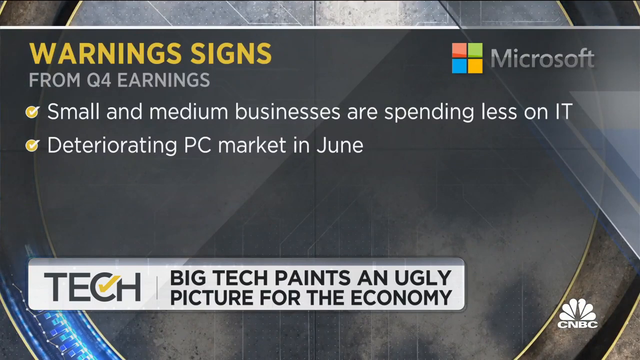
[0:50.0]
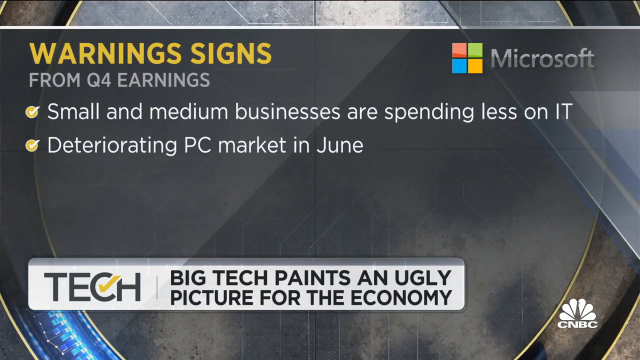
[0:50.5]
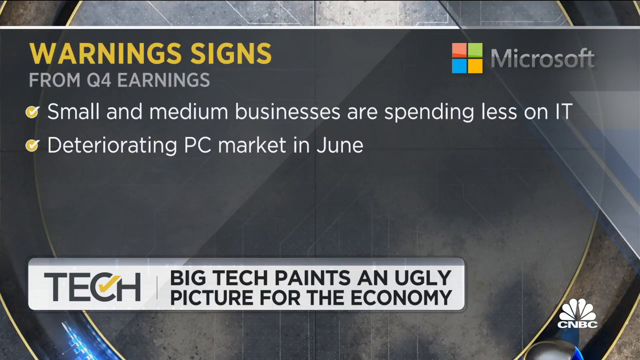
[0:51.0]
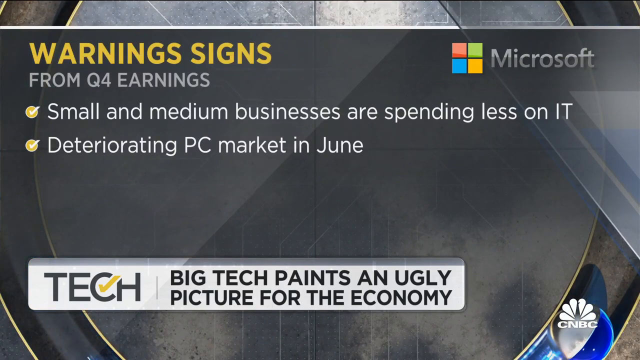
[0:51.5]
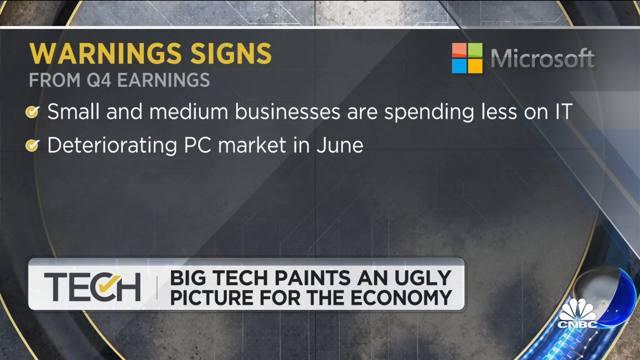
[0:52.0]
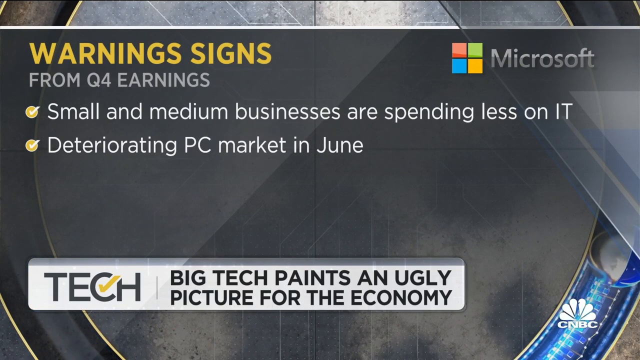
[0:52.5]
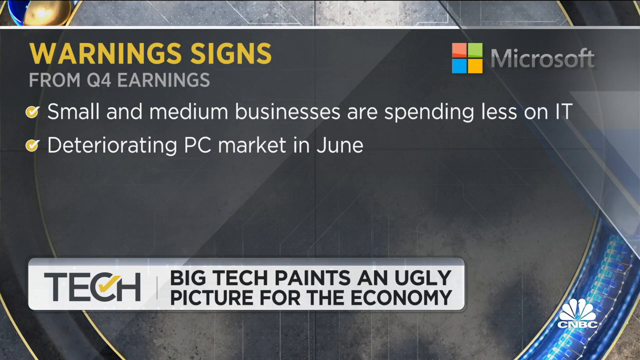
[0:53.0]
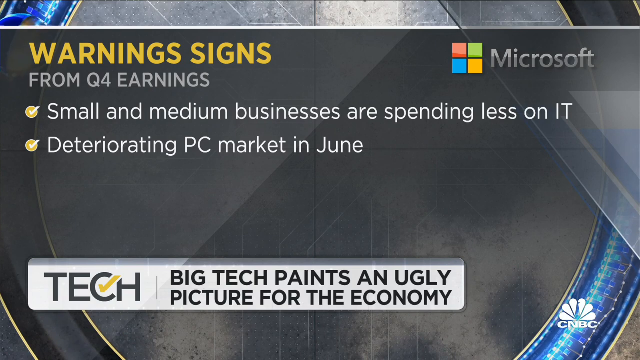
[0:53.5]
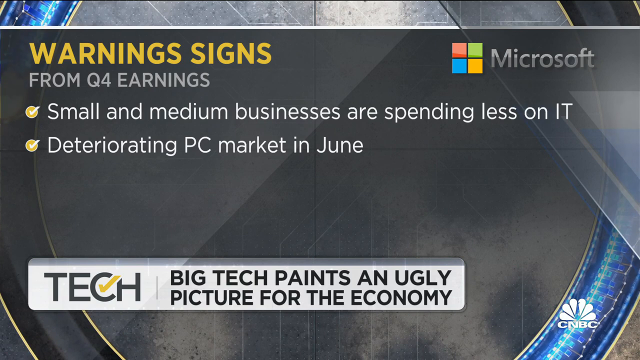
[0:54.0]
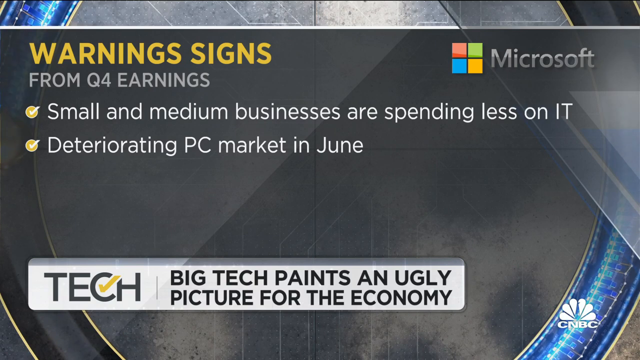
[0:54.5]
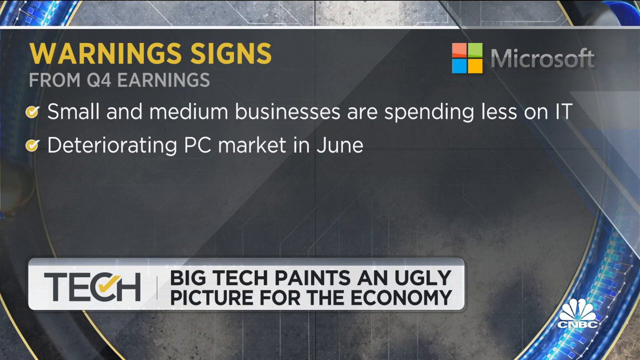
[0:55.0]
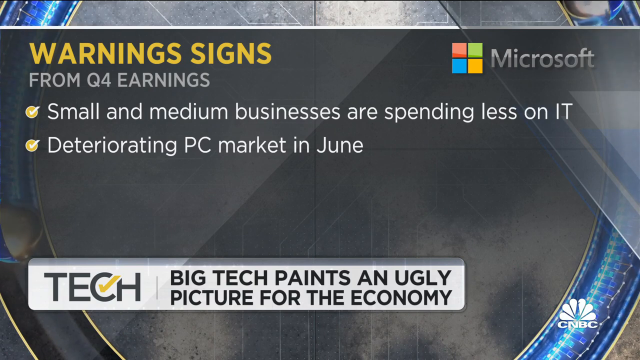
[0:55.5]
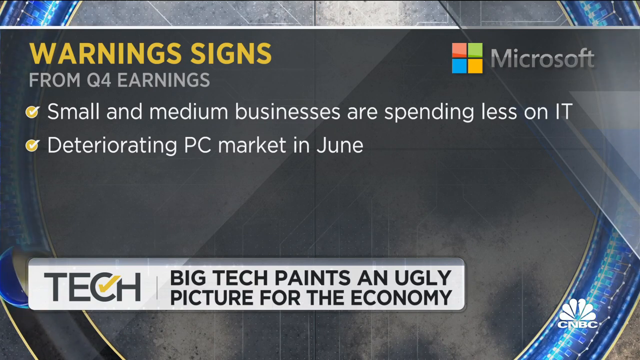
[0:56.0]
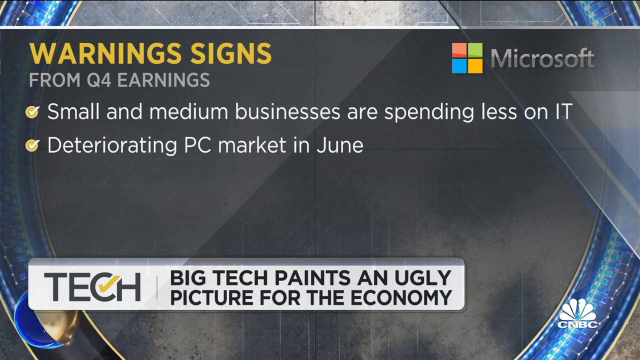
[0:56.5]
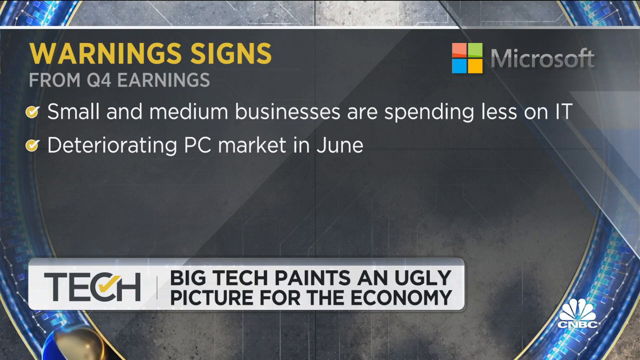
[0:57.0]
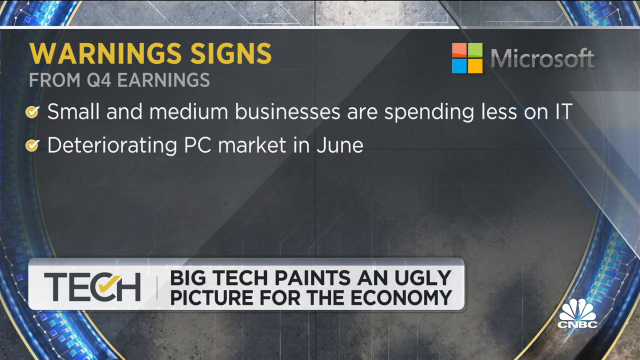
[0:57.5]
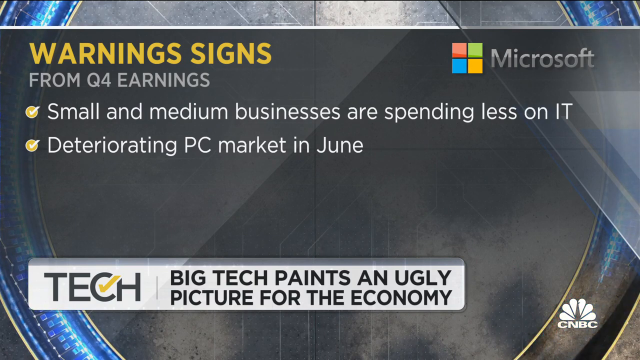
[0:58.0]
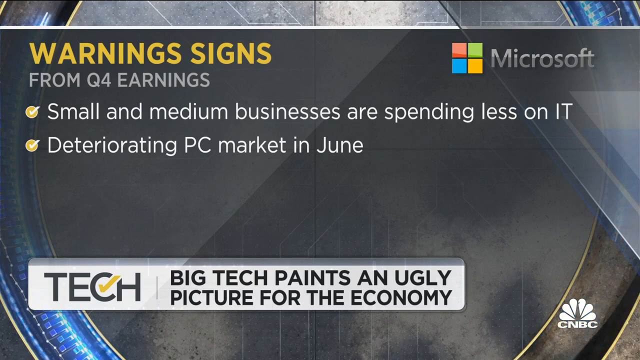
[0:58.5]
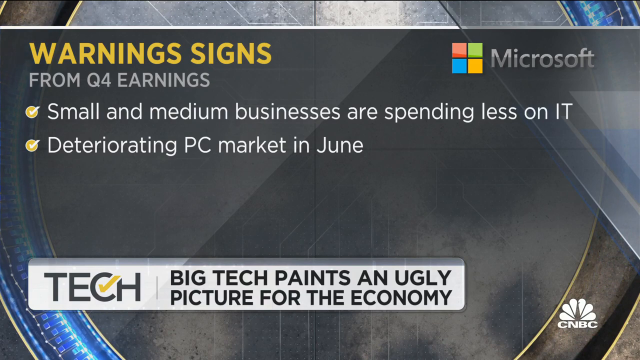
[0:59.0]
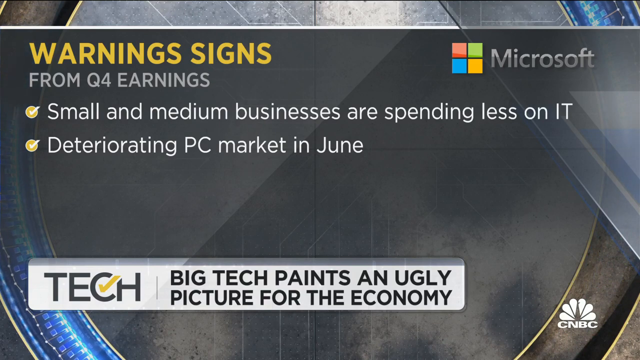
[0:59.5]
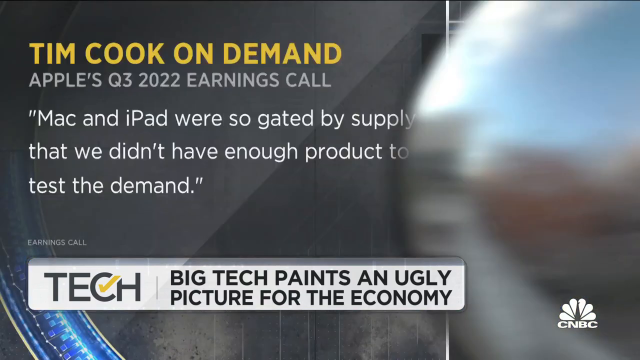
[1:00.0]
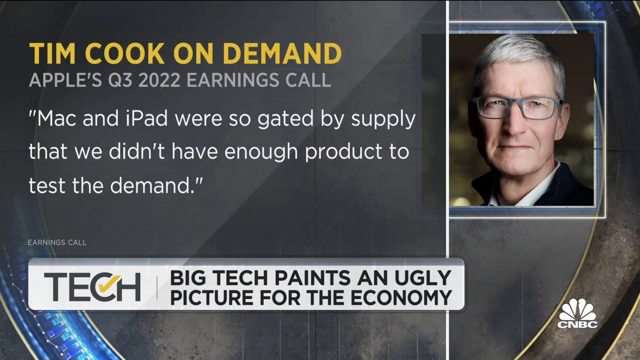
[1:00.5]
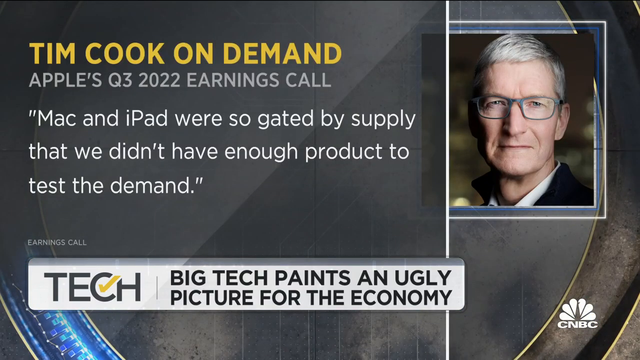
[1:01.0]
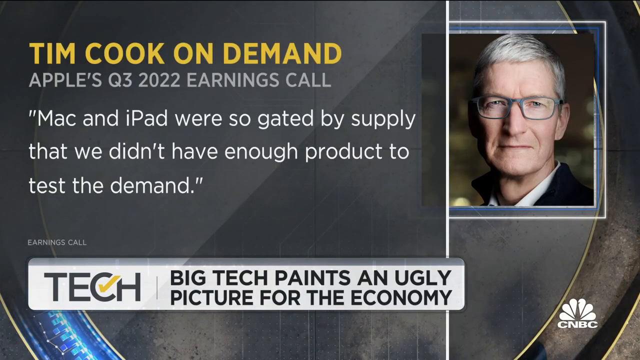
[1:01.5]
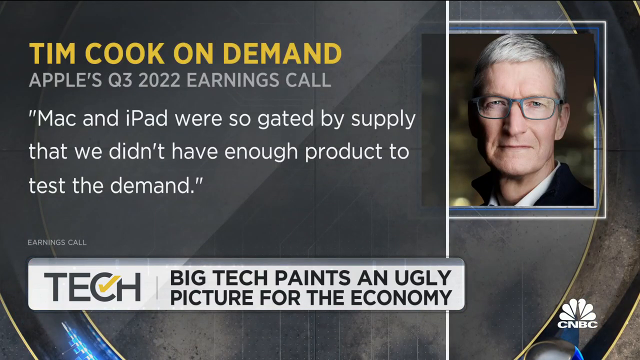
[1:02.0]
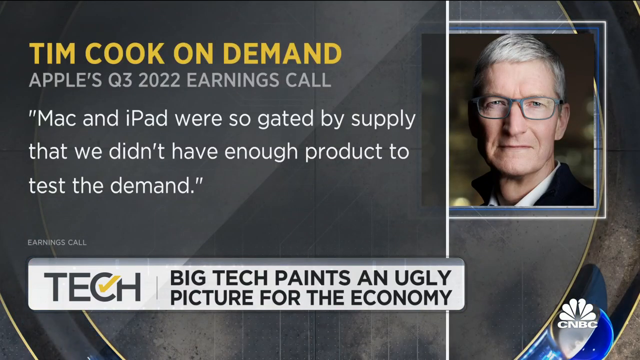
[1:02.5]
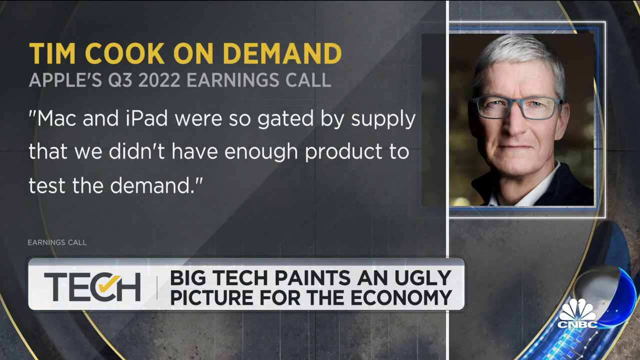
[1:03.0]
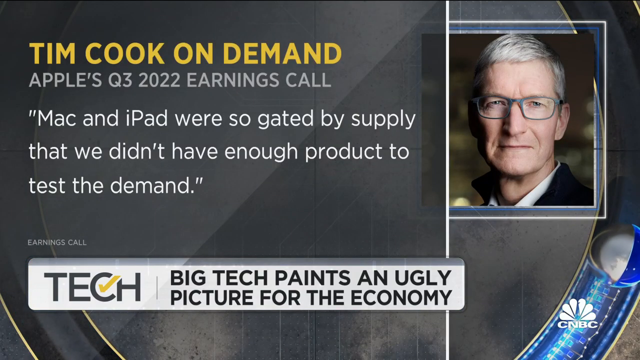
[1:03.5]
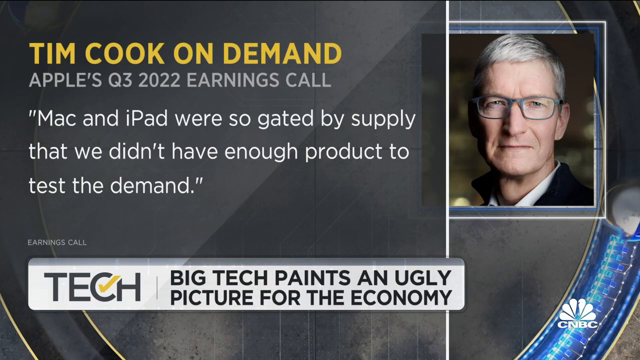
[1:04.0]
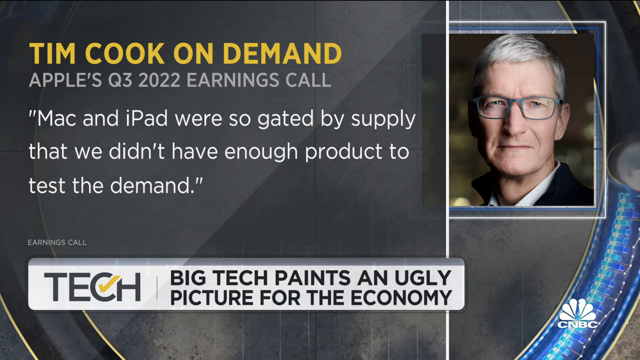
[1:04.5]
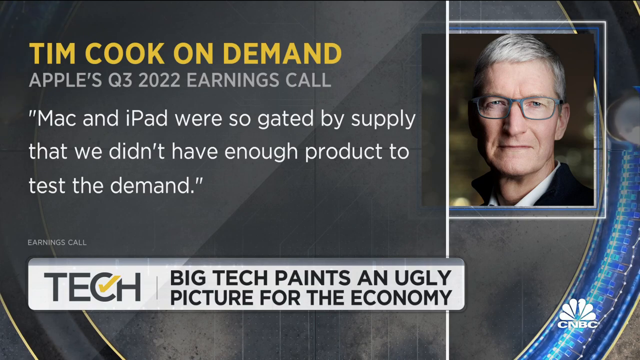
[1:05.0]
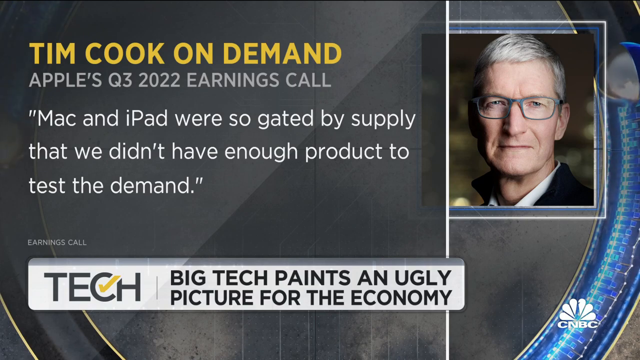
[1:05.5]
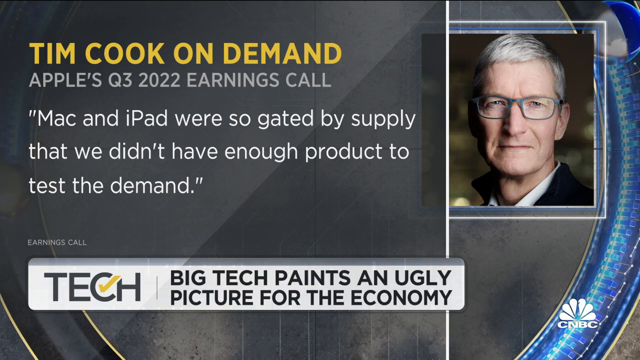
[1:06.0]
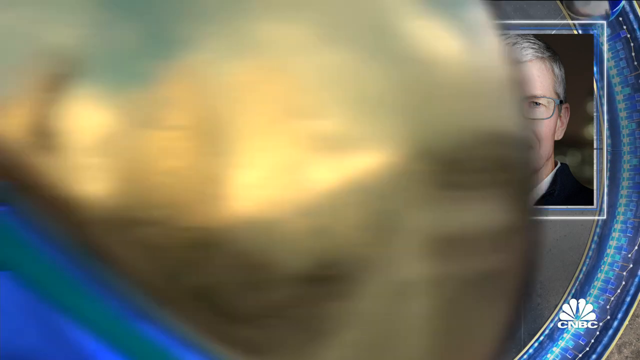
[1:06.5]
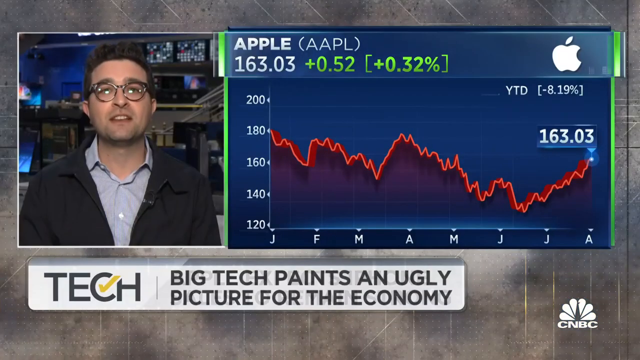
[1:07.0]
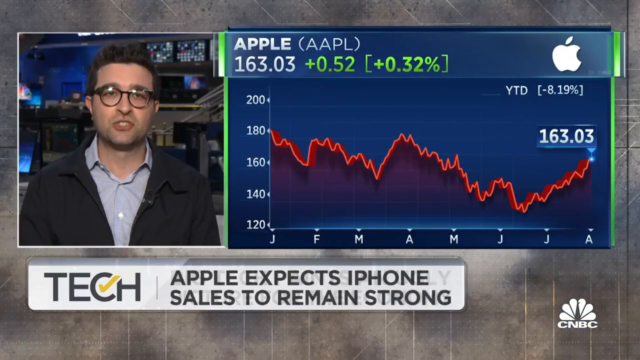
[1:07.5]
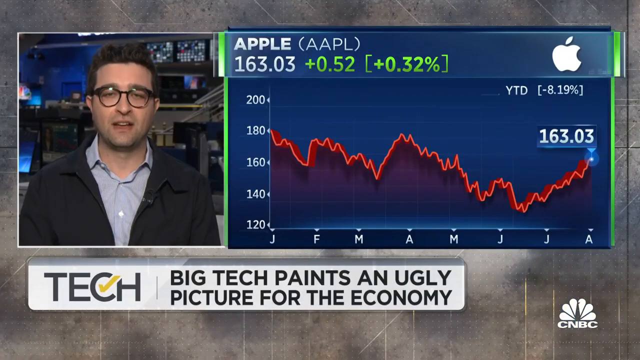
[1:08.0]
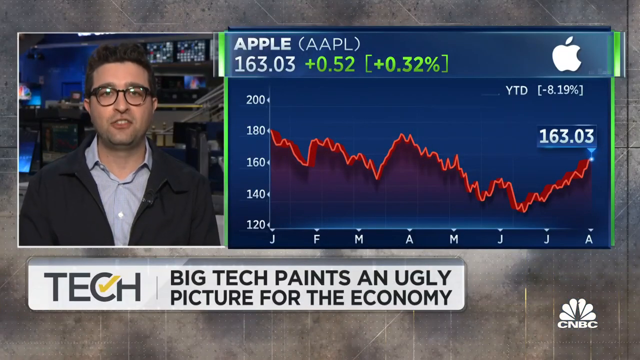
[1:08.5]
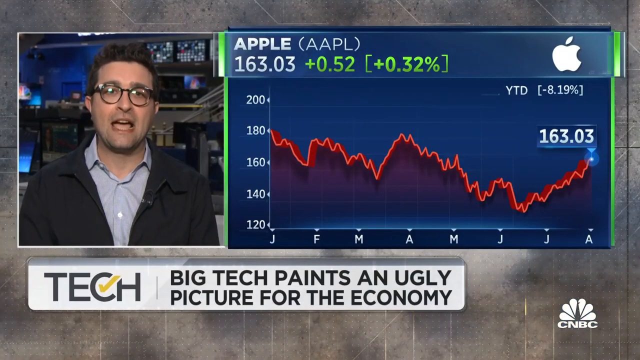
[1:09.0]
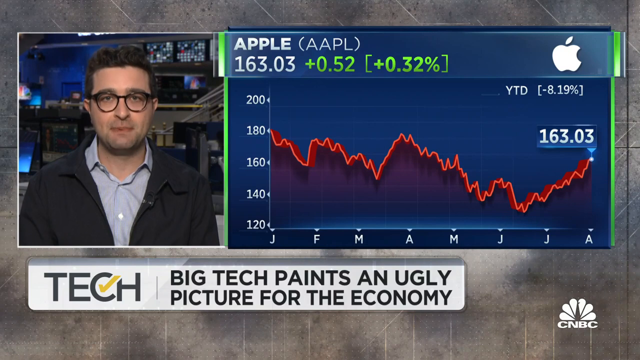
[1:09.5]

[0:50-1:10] The CNBC news story about big tech painting an ugly picture for the economy continues with the warning signs from quarter 4 earnings. A Microsoft logo is in the upper right-hand corner during this part of the segment. The first warning sign is that small and medium businesses are spending less on IT, and the second is a deteriorating PC market in June. The story then cuts to Tim Cook. The title says "Tim Cook on demand," referring to Apple's quarter three 2022 earnings call. A quote from Tim Cook reads: "Mac and iPad were so gated by supply that we didn't have enough product to test the demand." The CNBC logo is in the lower right-hand corner.